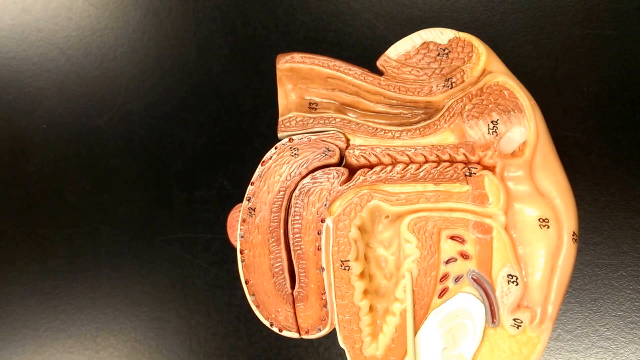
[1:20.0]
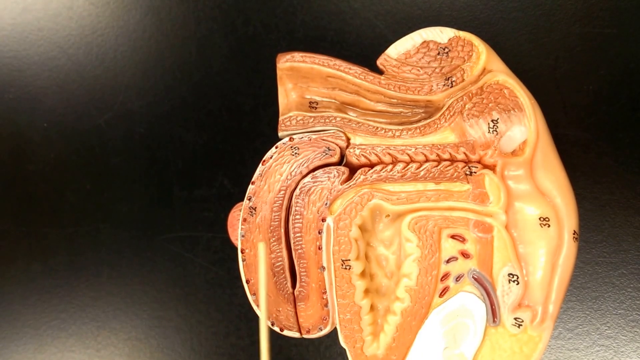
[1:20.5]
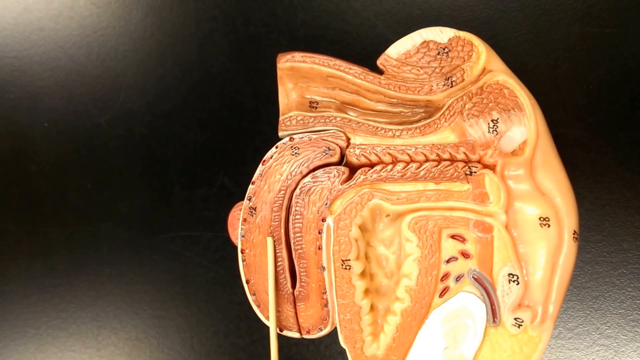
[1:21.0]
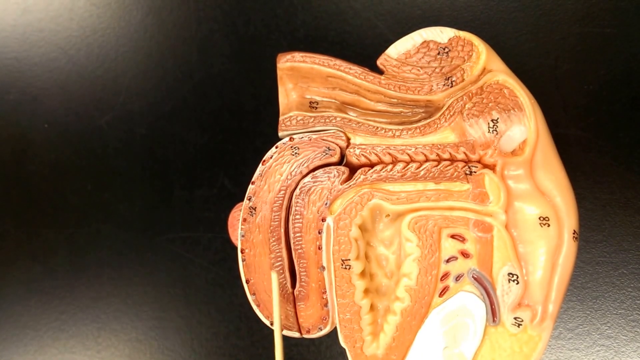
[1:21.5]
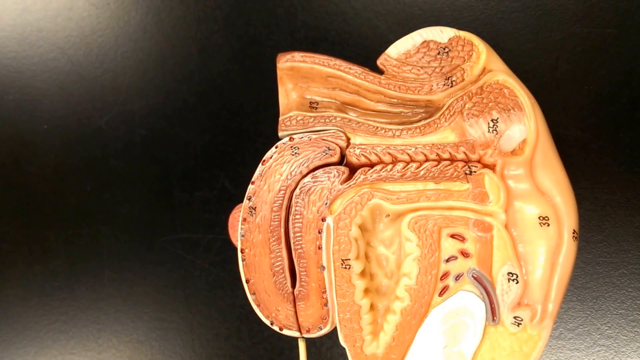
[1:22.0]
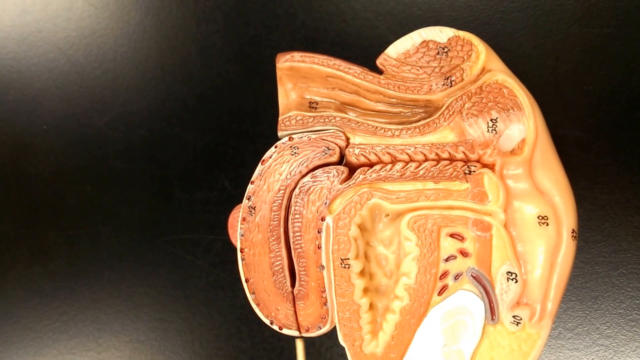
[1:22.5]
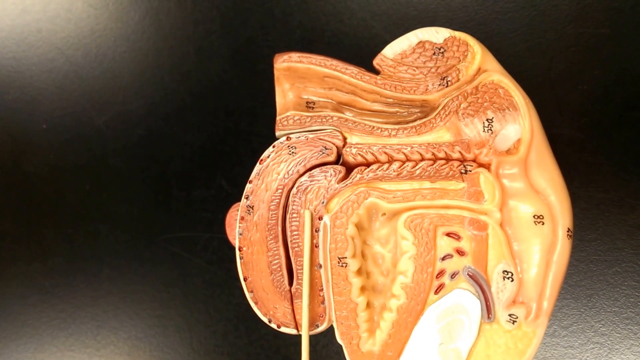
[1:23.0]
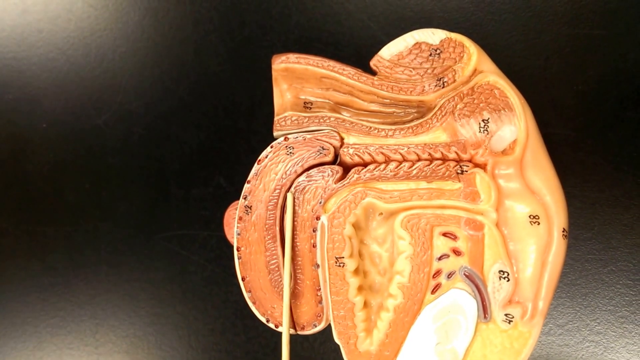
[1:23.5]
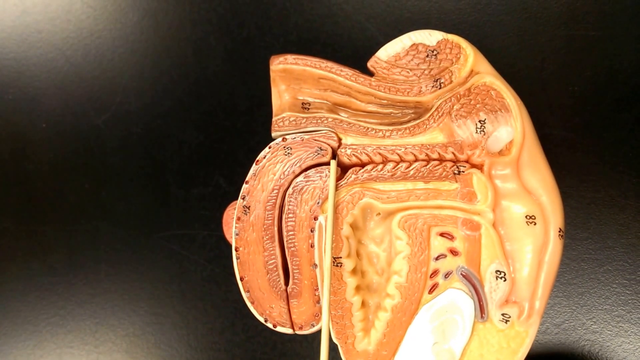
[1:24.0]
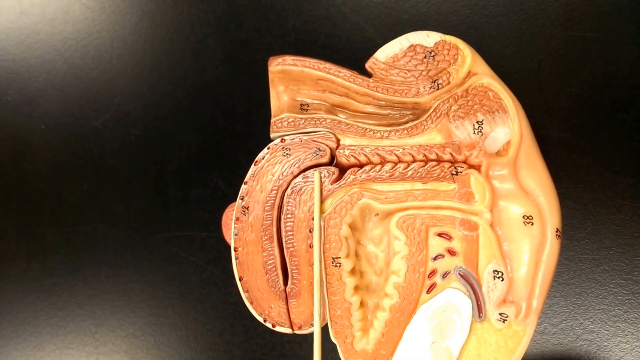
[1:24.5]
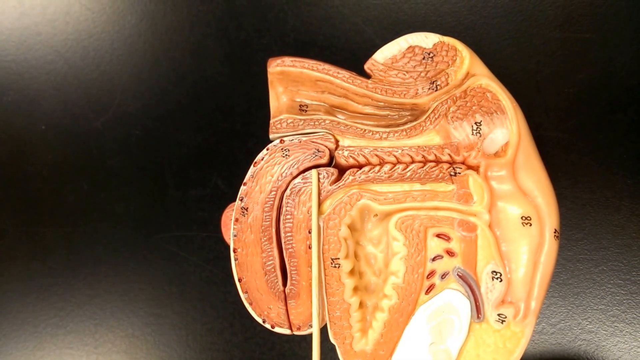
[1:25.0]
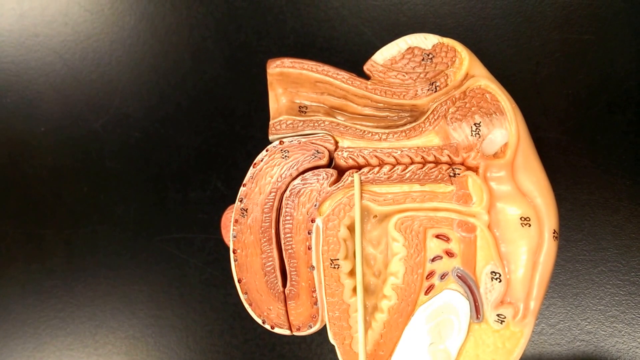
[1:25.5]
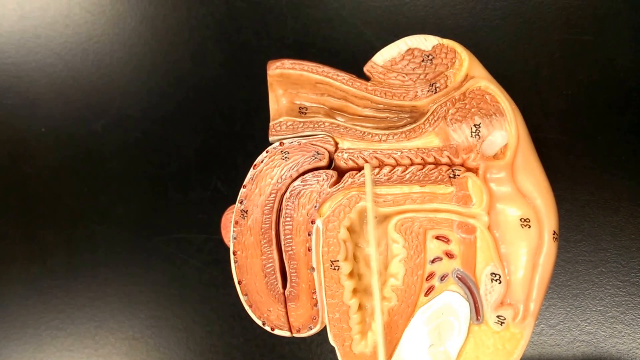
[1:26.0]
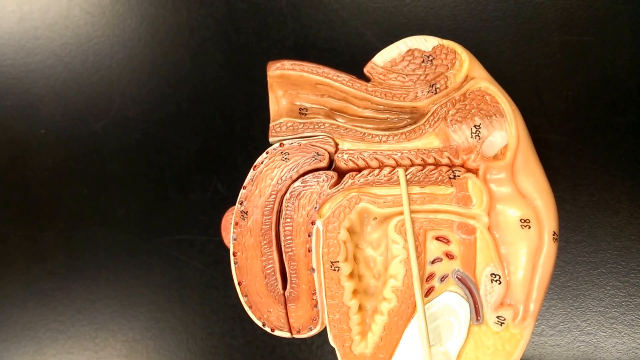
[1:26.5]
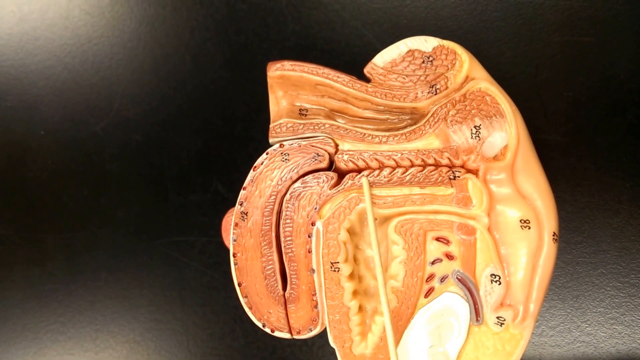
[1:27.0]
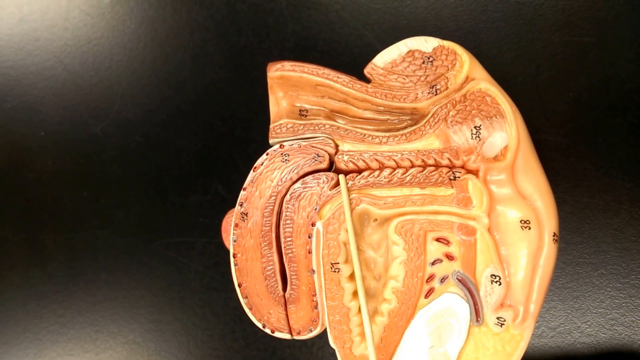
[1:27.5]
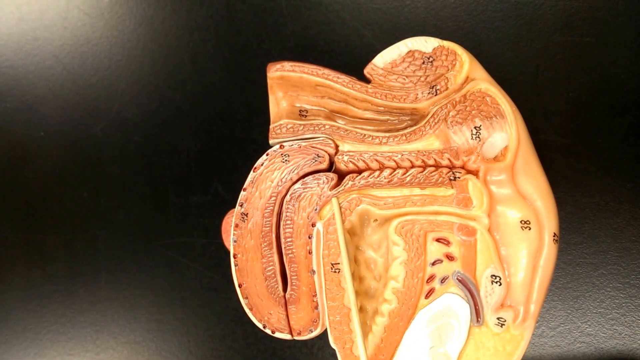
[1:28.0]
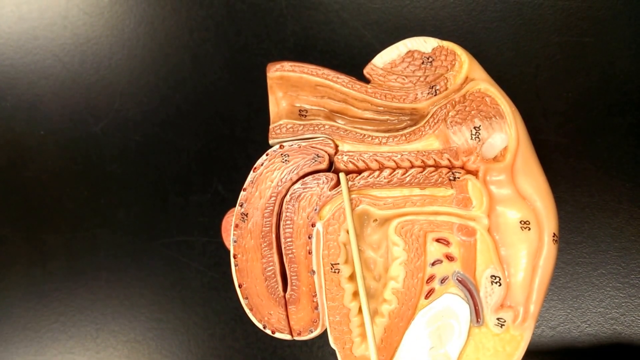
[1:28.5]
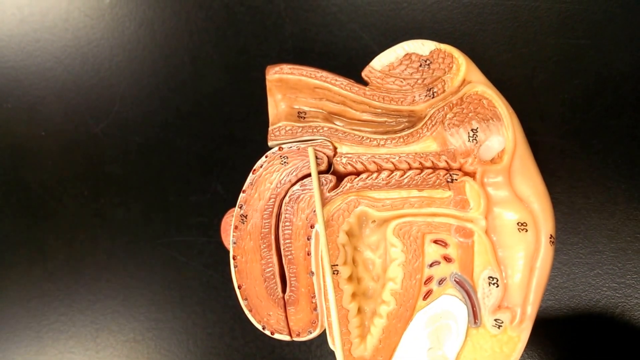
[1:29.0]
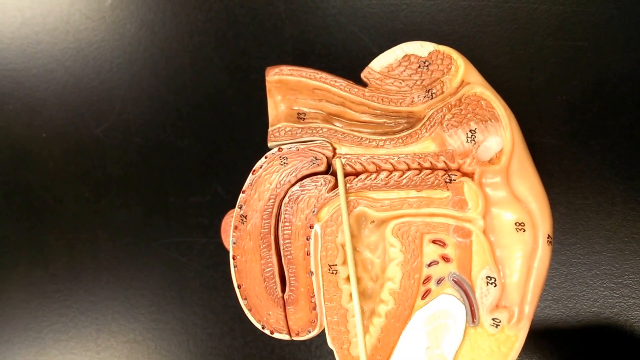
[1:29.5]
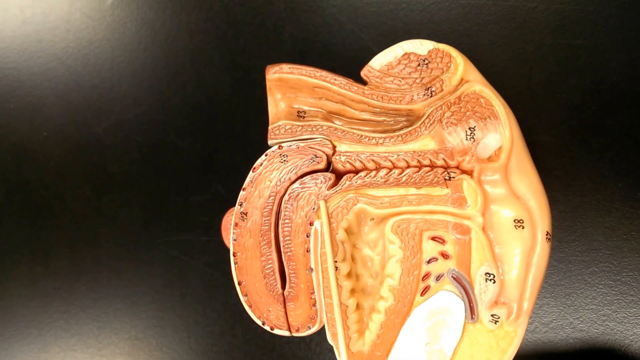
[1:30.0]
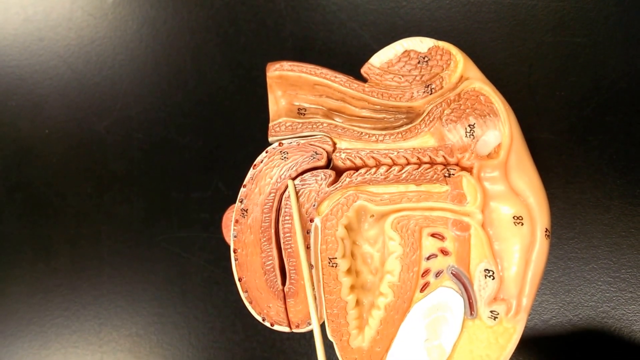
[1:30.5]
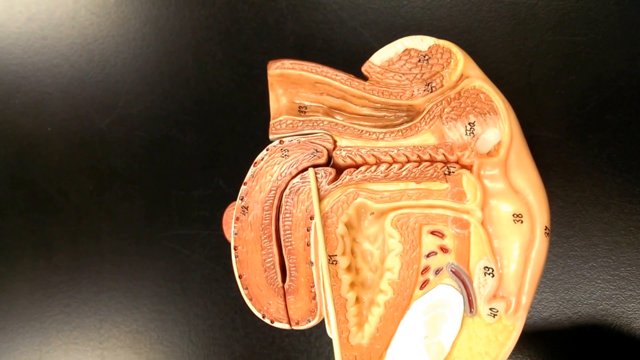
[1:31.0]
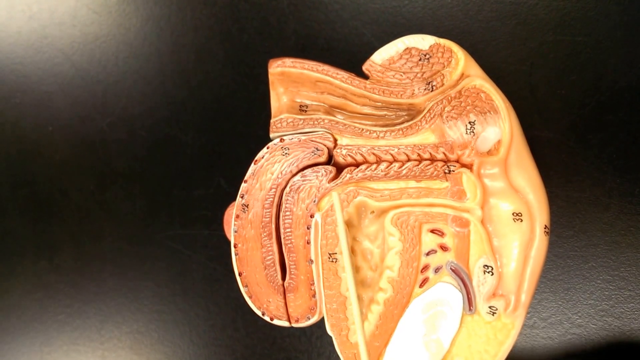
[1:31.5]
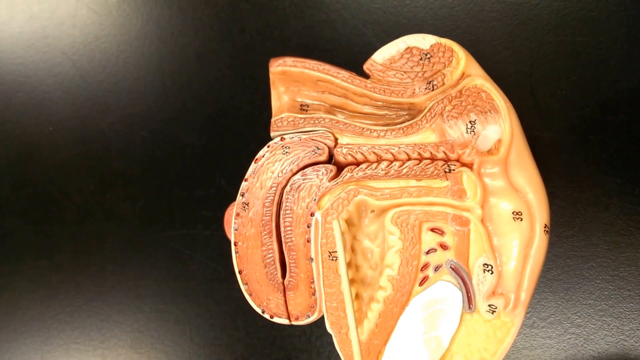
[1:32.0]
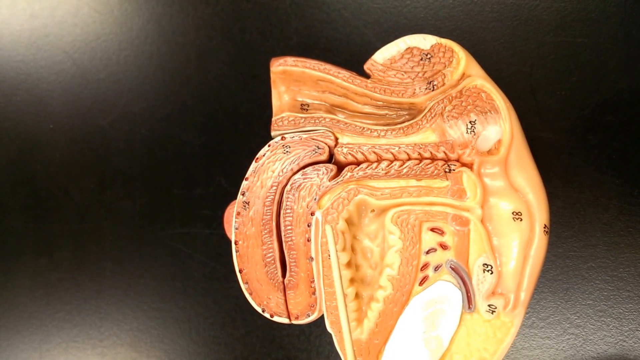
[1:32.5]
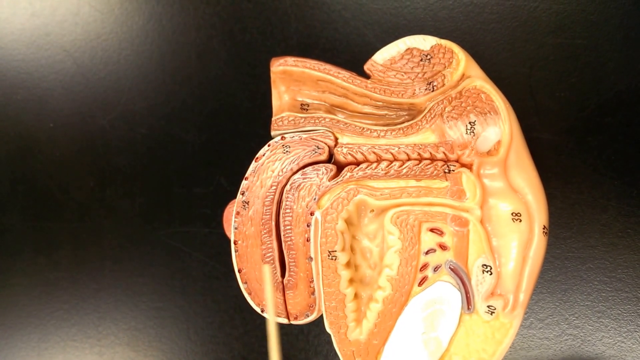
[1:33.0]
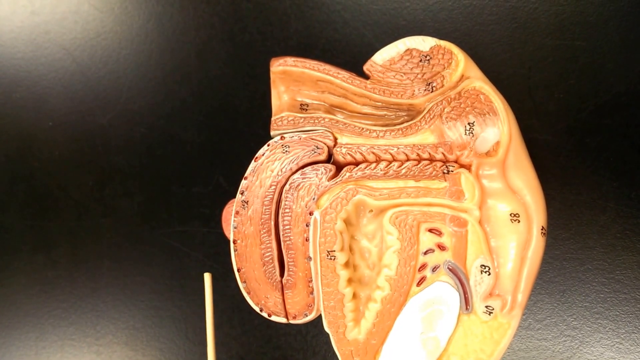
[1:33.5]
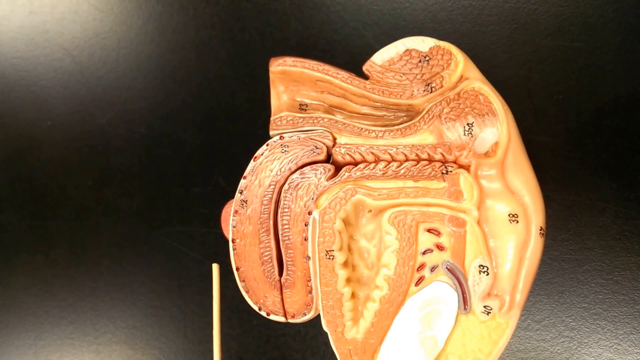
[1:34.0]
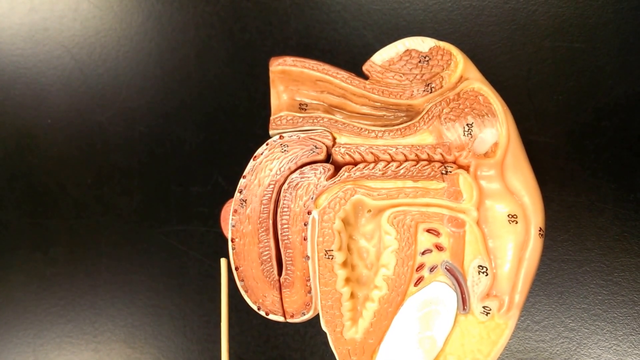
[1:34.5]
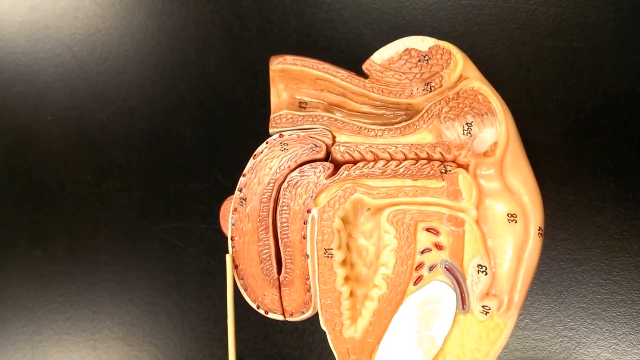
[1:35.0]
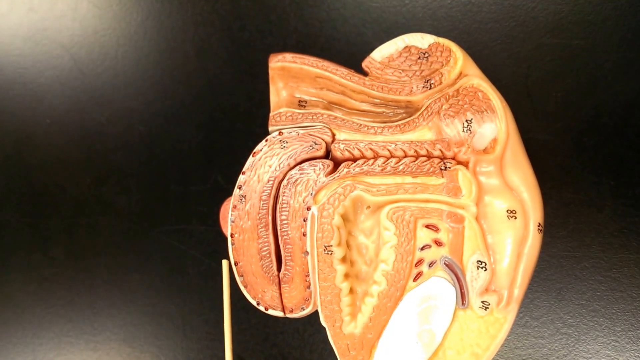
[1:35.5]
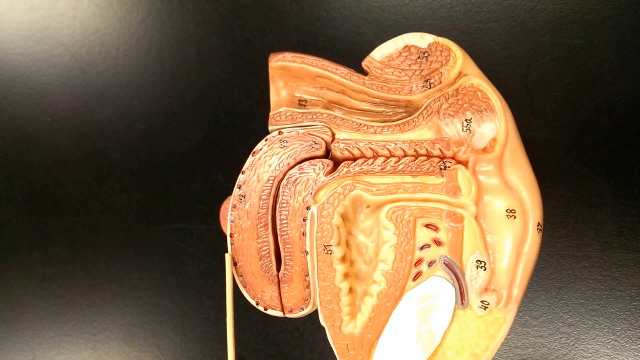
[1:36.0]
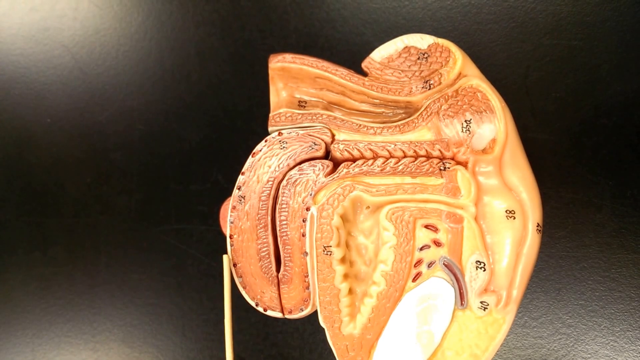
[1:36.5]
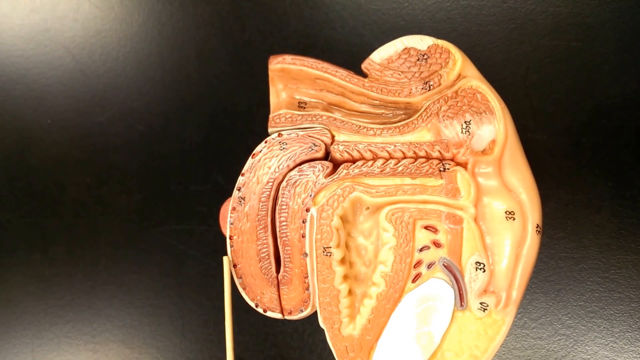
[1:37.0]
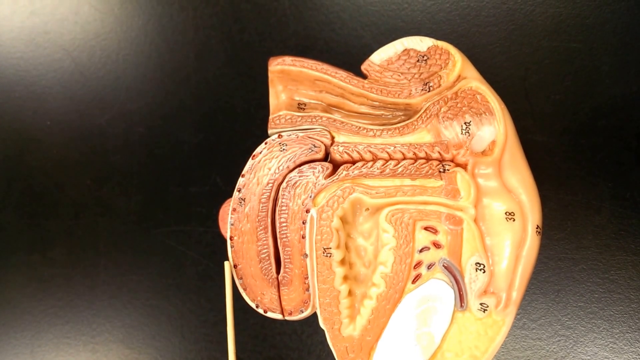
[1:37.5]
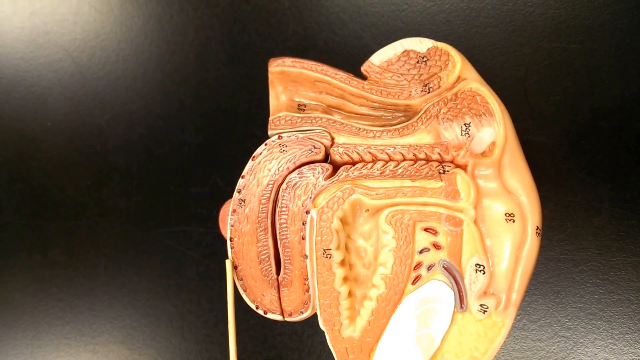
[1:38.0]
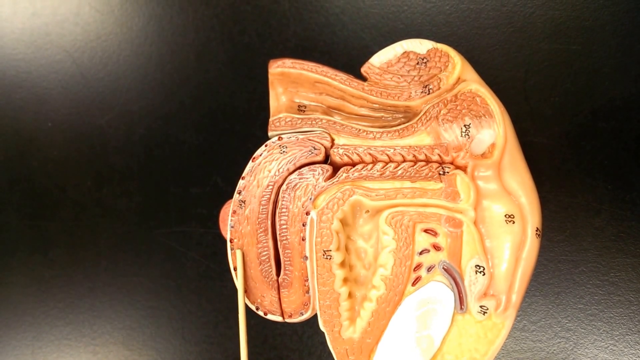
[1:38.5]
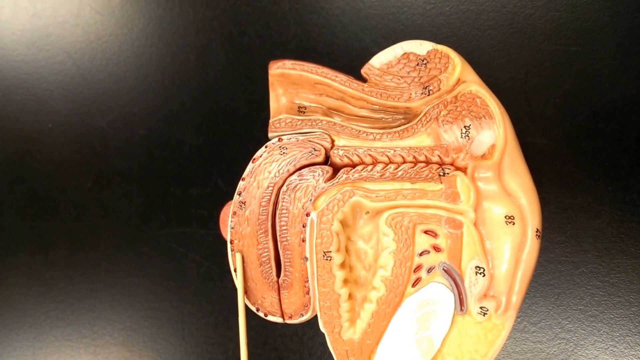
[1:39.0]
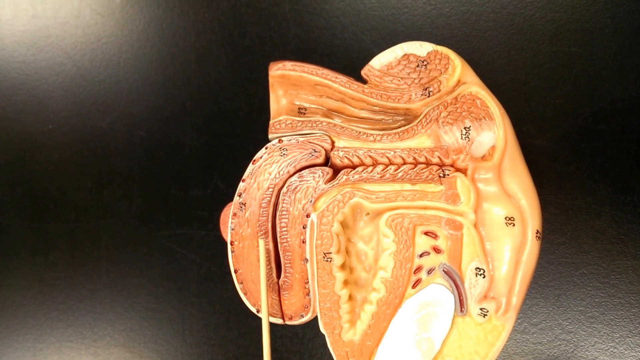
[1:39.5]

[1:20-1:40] A side-view dissection of a female human reproductive system shows the various organs involved, including the genitals: large amounts of textured pink masses, tubes, and a side view of the skin, fatty masses and other parts. The camera is pointed toward the top part of the model, and the person uses a light brown wooden dowel or stick to point at various sections. At first the stick points toward the center of the model, then toward a large hook-shaped pink section on the left labeled with the number 42. They tap it with the stick and pull the stick downward off screen, then tap a large mass next to the number 42 mass. They point toward a sort of tunnel section formed between the two masses, then move the stick along the tunnel to a section covered with various fleshy-looking ridges, and move the stick along the hole and tunnel formed there.